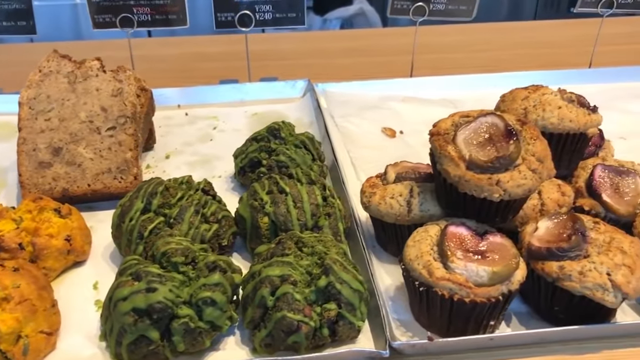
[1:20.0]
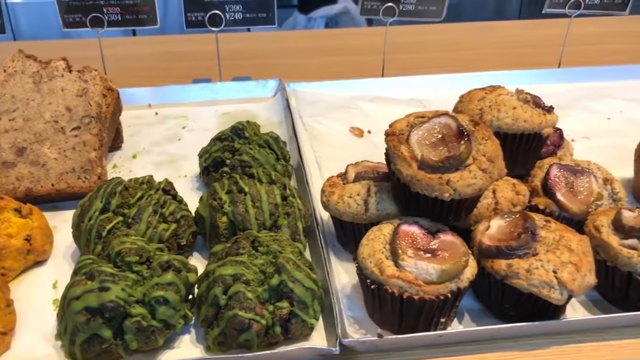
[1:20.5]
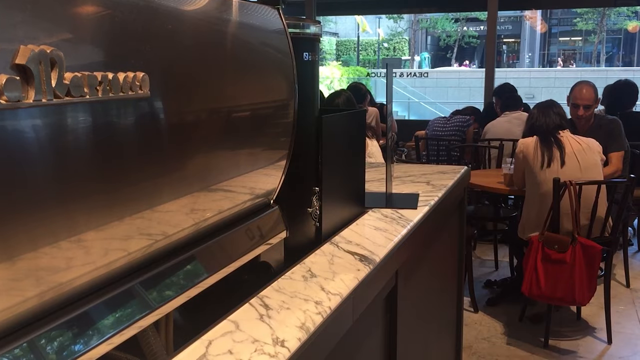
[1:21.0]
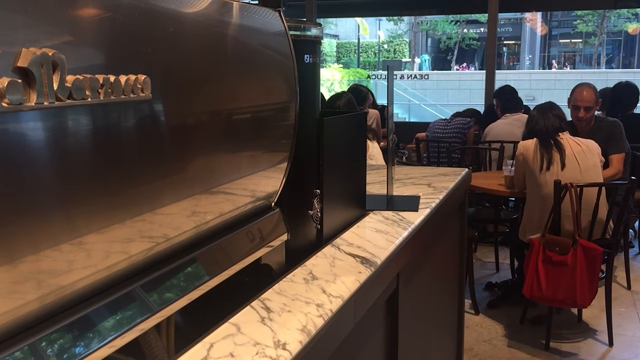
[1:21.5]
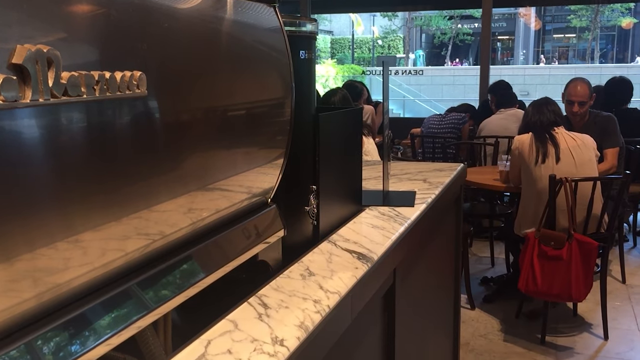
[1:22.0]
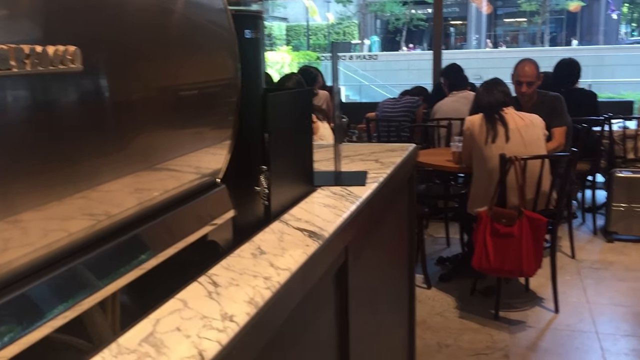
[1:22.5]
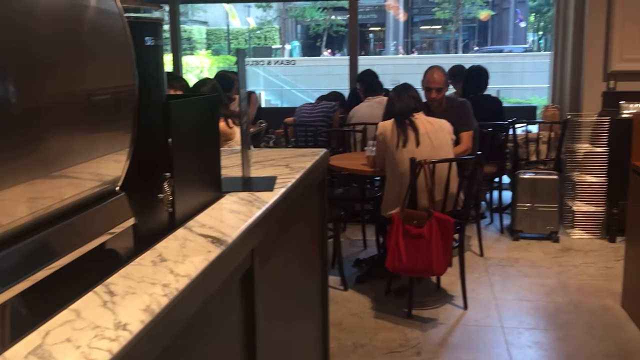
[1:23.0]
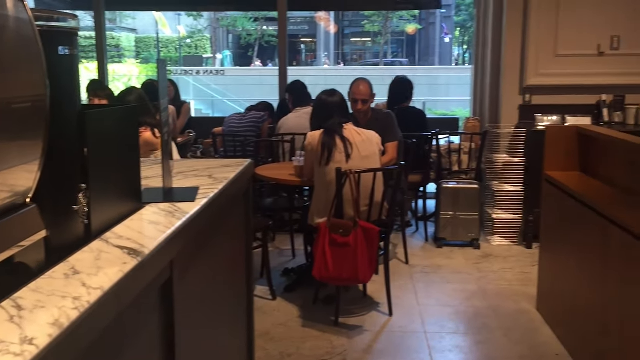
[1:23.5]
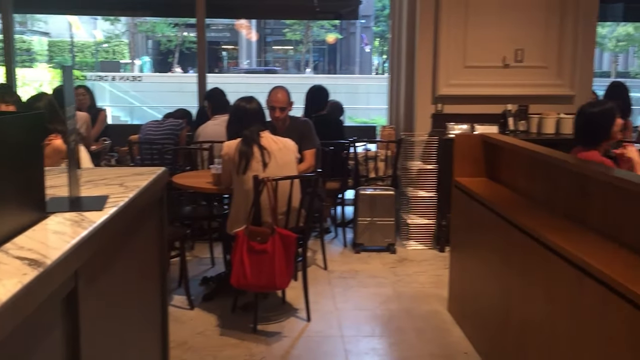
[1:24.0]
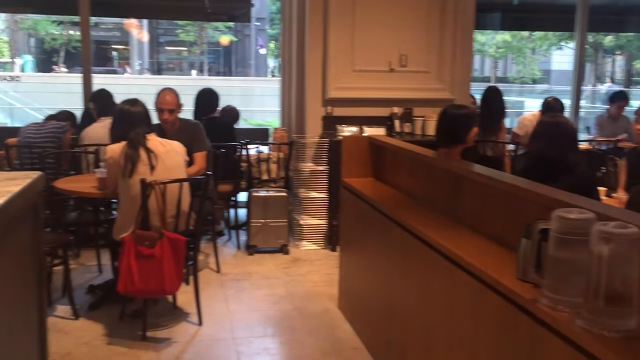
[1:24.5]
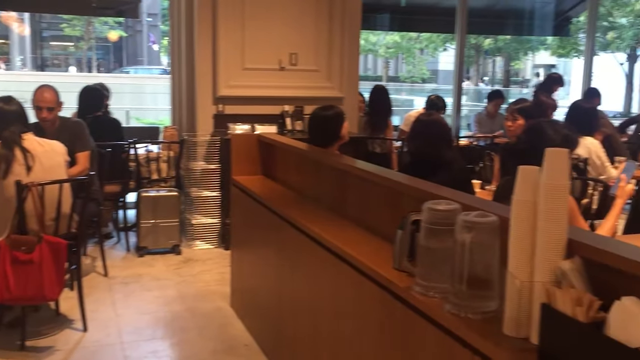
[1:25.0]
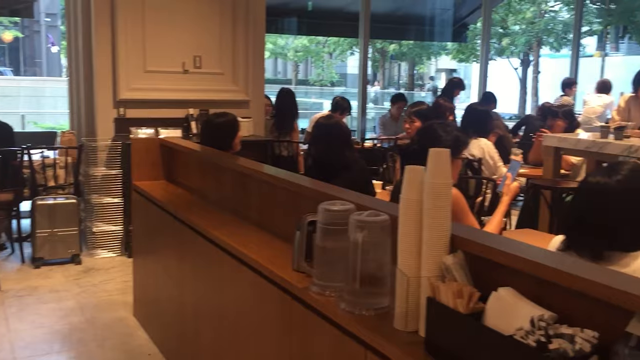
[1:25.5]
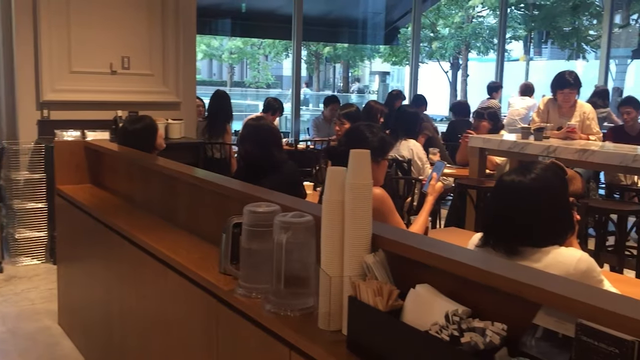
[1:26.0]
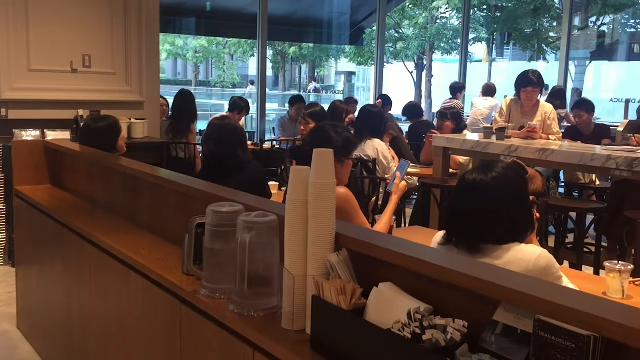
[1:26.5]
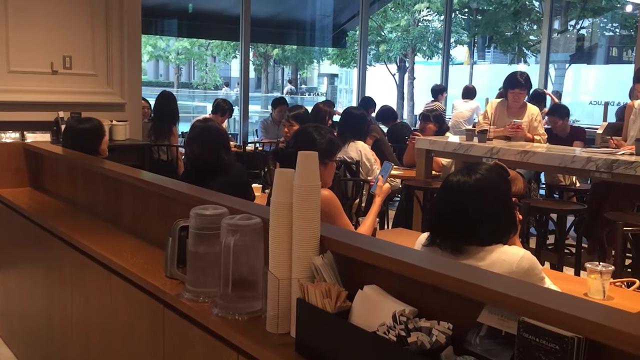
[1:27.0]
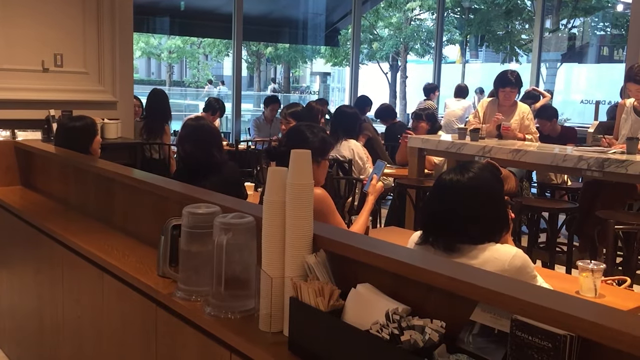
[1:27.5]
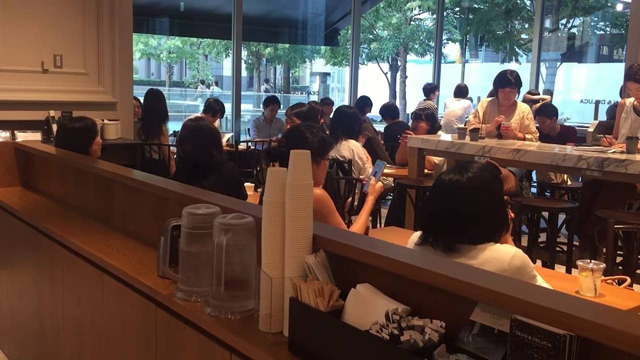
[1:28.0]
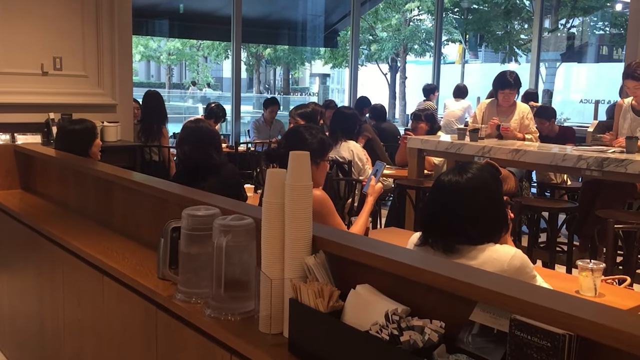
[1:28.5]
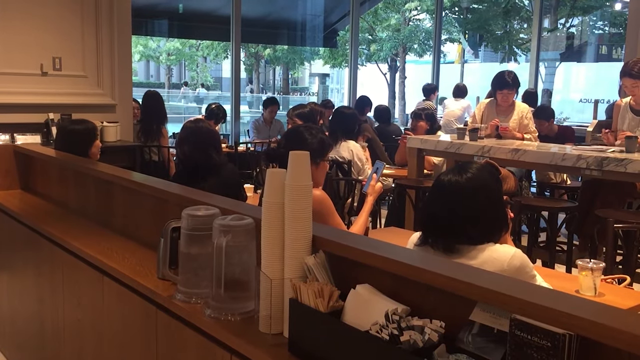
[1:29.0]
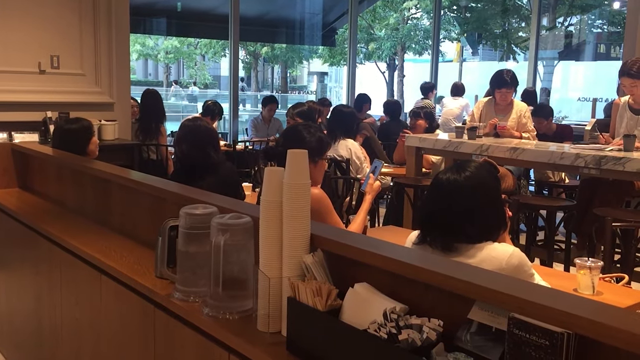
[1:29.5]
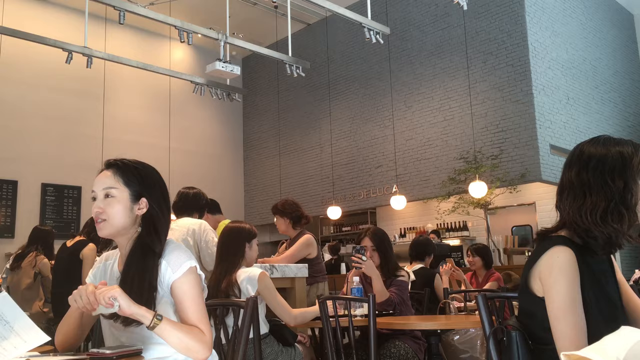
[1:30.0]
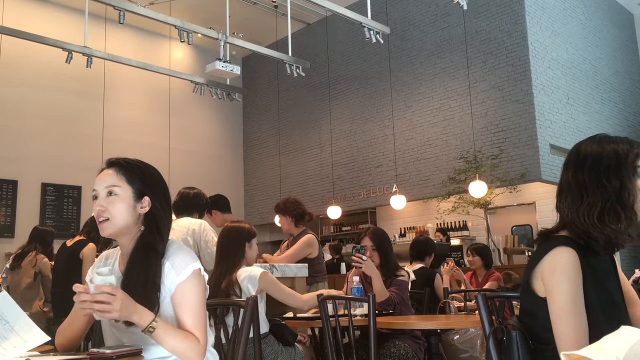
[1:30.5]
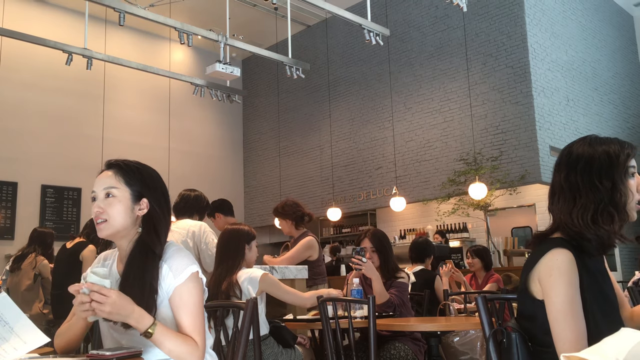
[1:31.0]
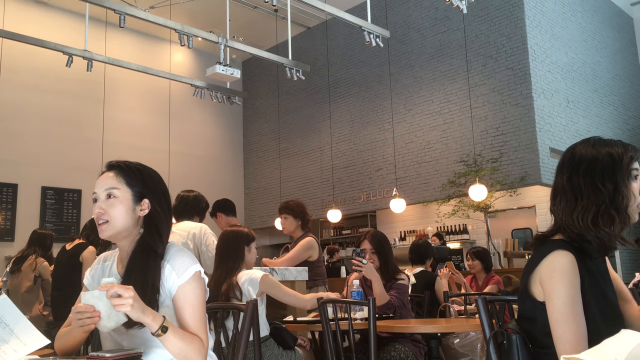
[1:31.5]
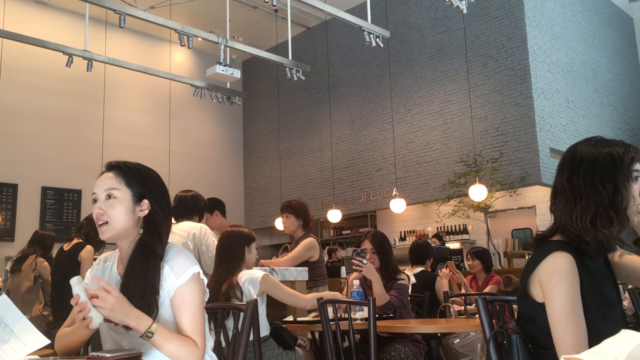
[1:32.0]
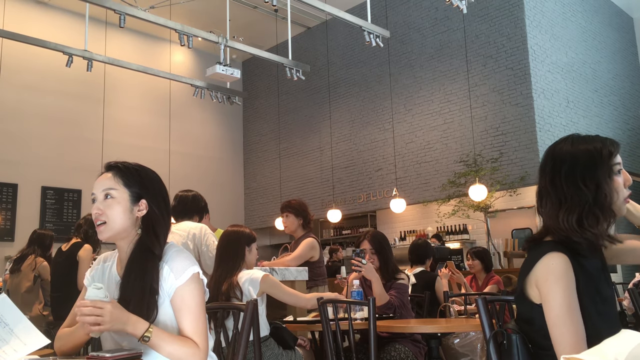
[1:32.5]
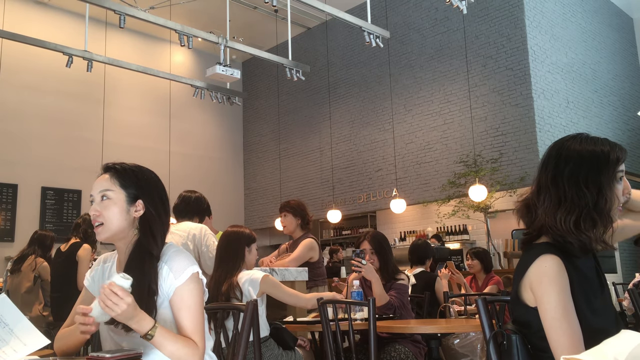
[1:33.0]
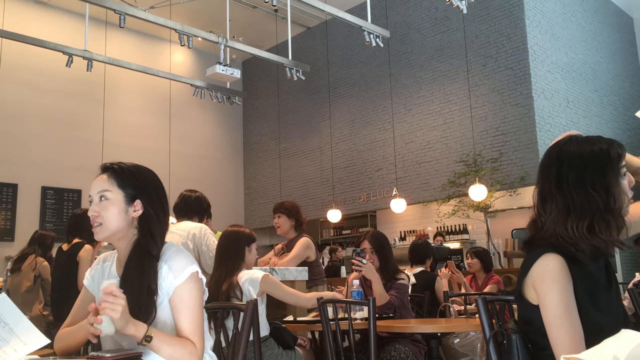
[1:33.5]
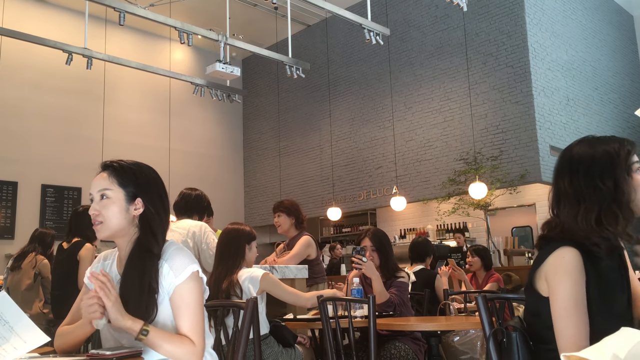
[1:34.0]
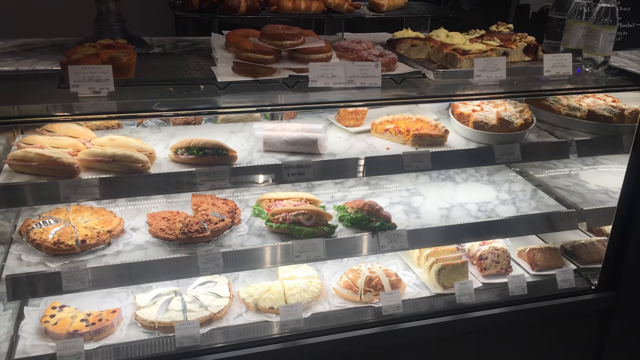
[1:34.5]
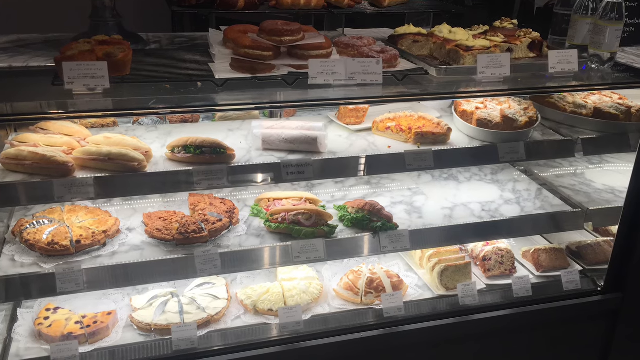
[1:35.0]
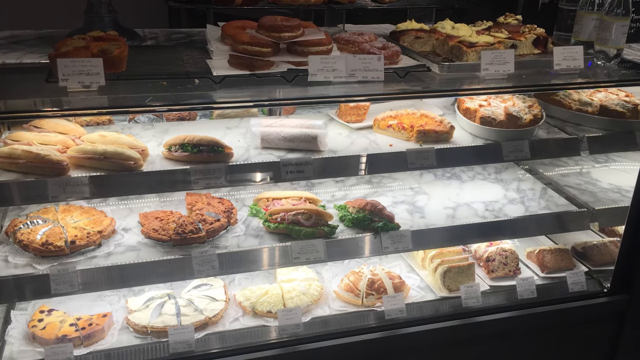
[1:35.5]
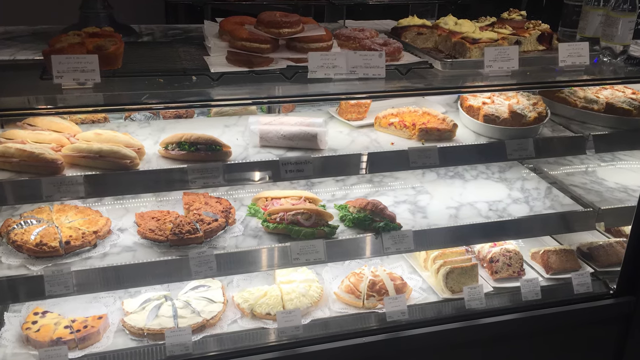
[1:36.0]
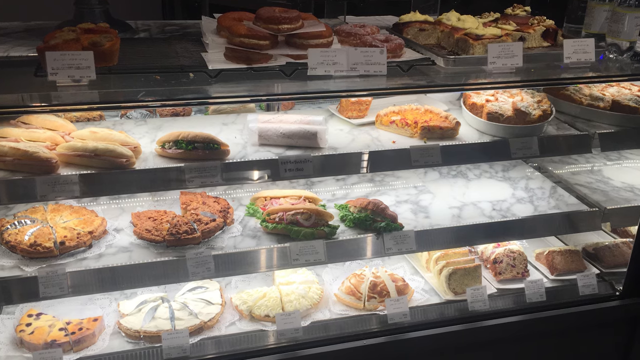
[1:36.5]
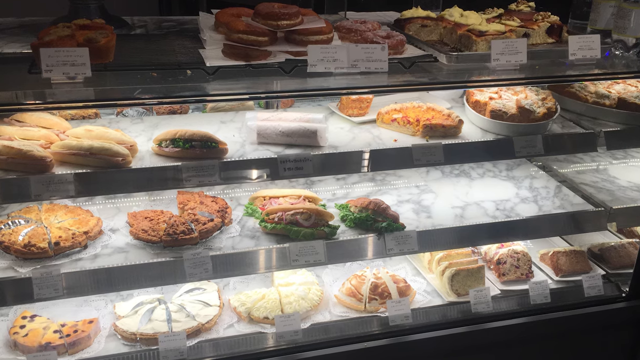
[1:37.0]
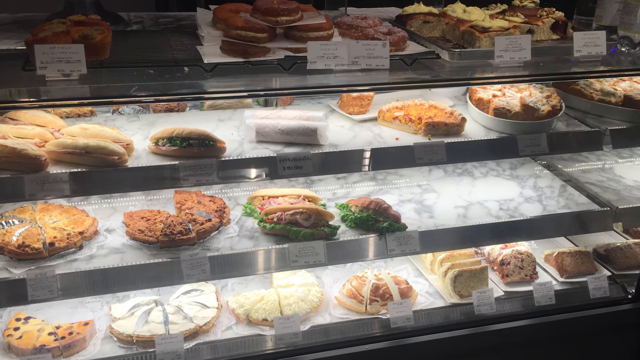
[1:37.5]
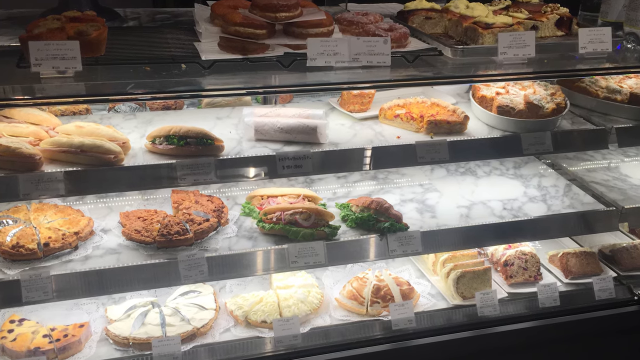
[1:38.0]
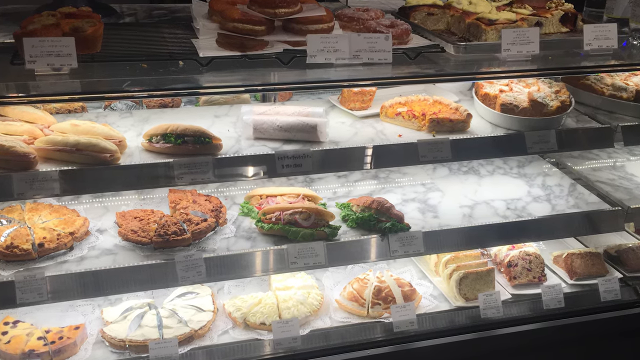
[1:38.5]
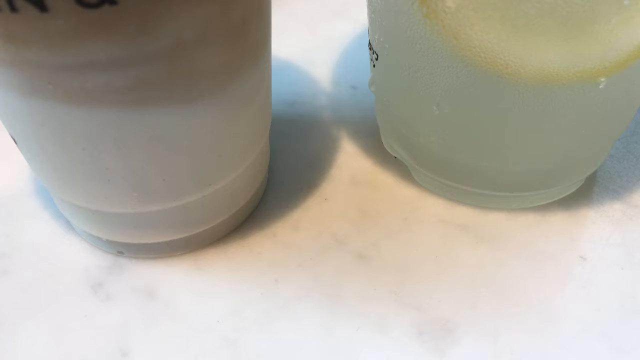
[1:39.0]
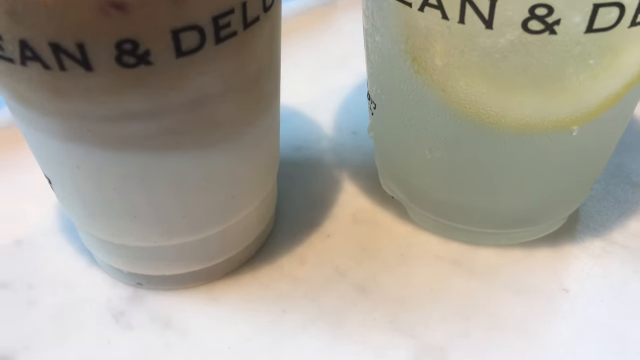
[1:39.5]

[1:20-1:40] A panning view shows pastries and muffins inside a glass case on the counter. Another view shows the inside of the restaurant in the middle of the day, with many people sitting at tables dining on their food and meals. Another view shows more people dining inside the restaurant. A photo then slowly zooms in again on a glass case in the restaurant holding many different foods, with pieces of pie and breads on the bottom, as well as sandwiches. Briefly, a view pans up from bottom to top showing Dean and DeLuca and what looks to be its beverages or shakes.